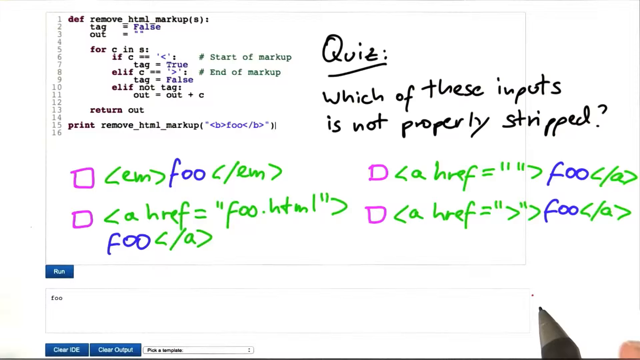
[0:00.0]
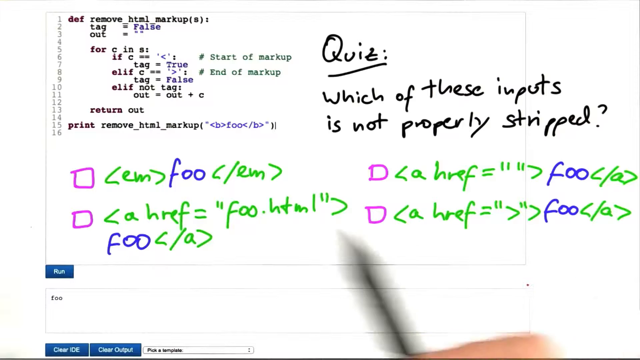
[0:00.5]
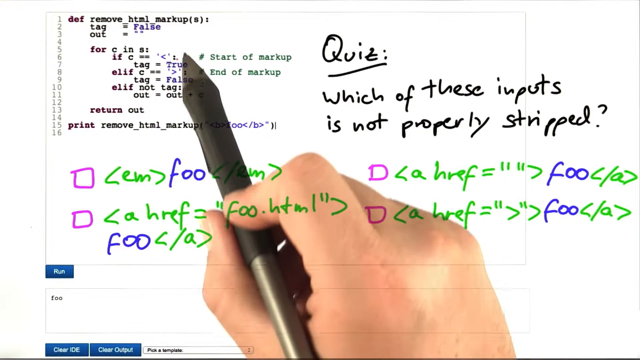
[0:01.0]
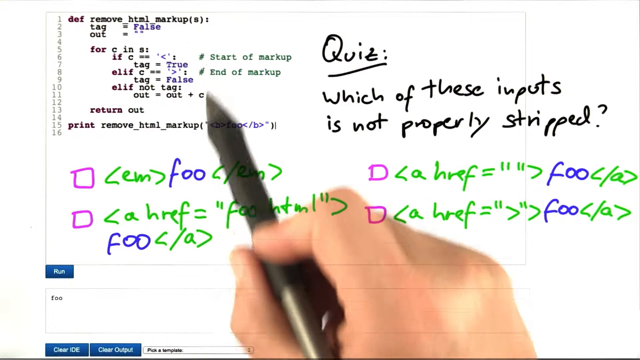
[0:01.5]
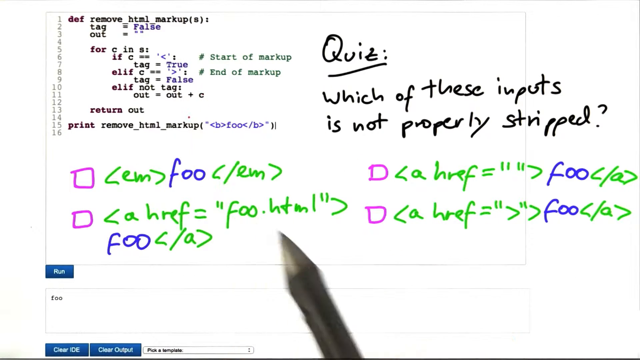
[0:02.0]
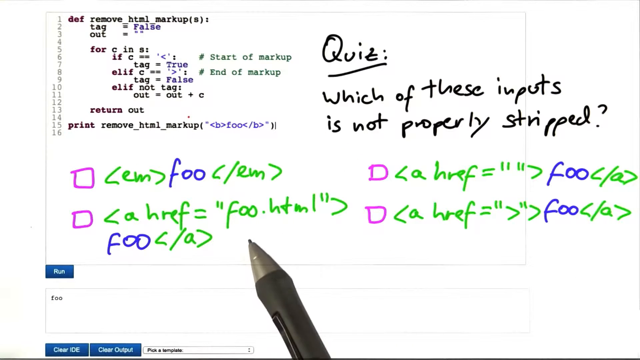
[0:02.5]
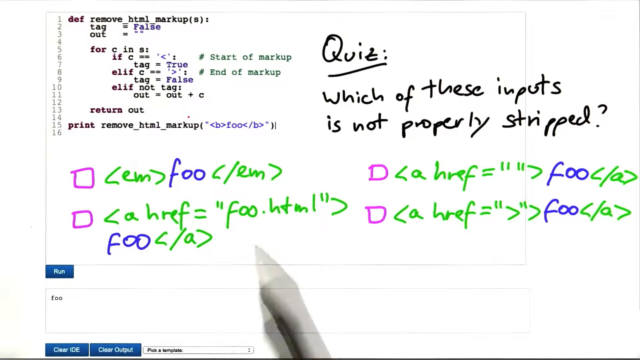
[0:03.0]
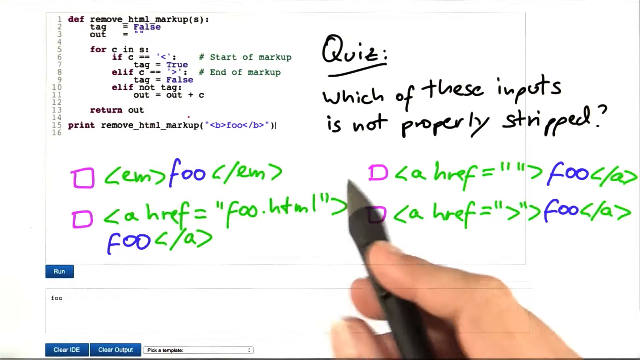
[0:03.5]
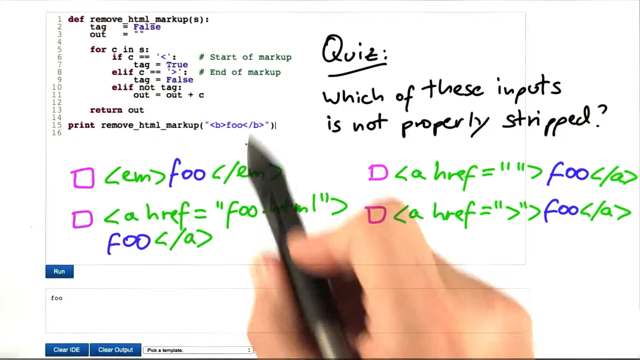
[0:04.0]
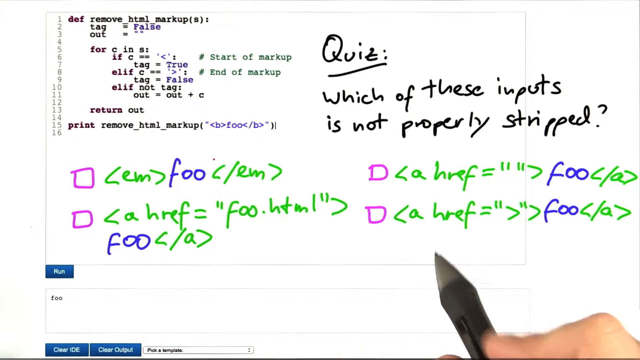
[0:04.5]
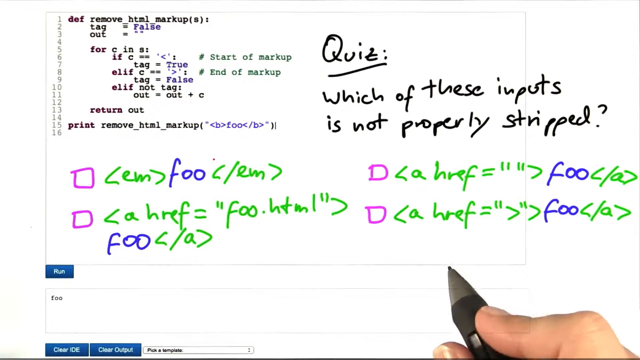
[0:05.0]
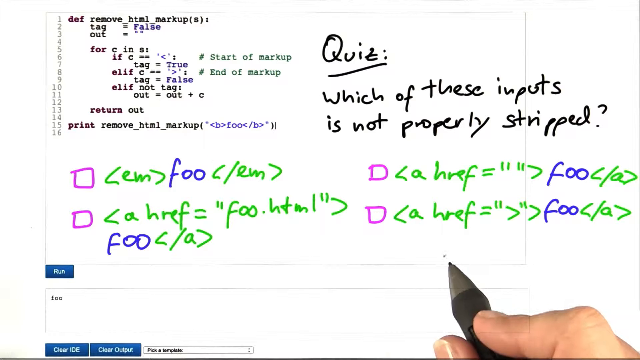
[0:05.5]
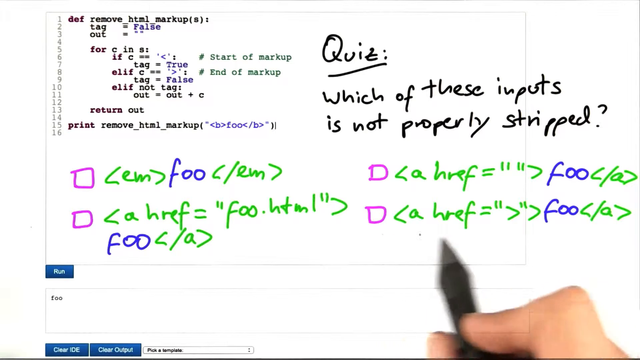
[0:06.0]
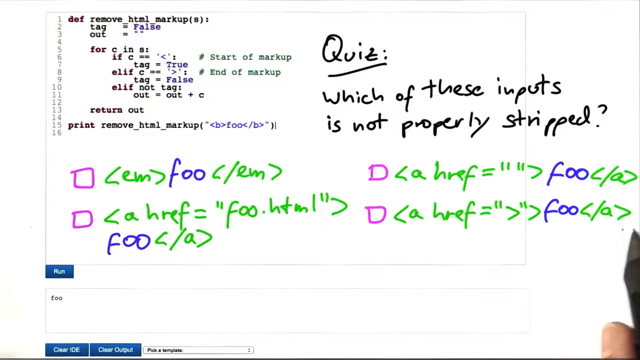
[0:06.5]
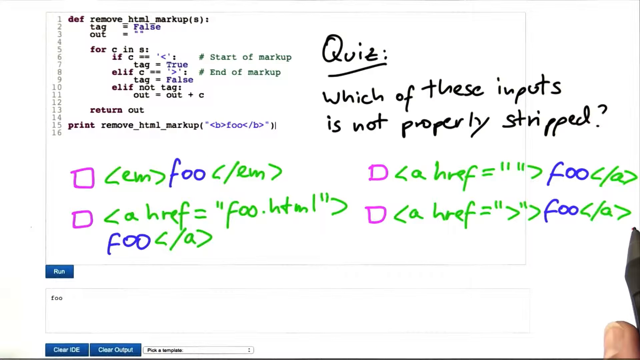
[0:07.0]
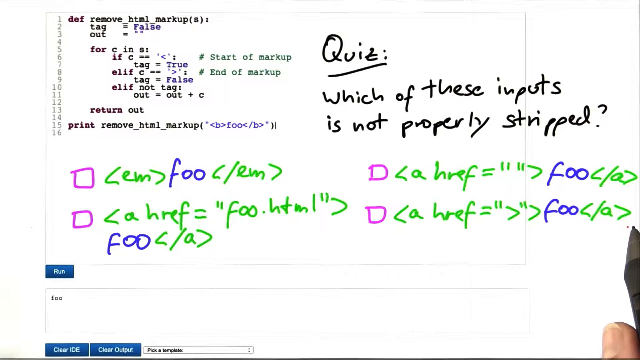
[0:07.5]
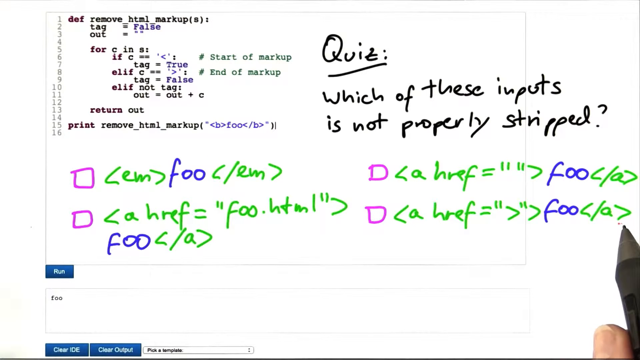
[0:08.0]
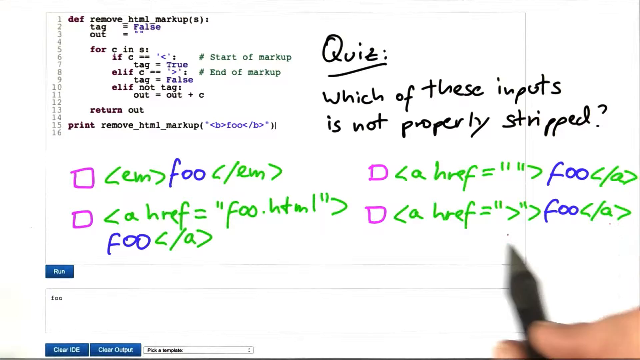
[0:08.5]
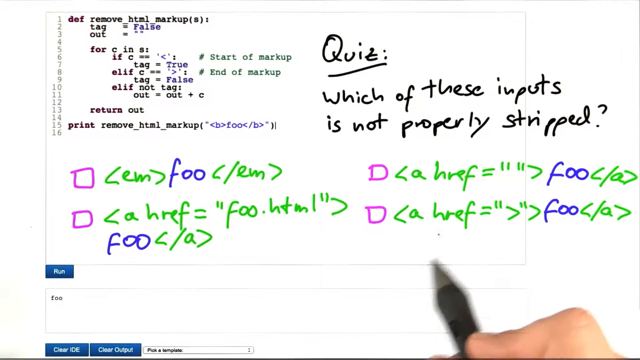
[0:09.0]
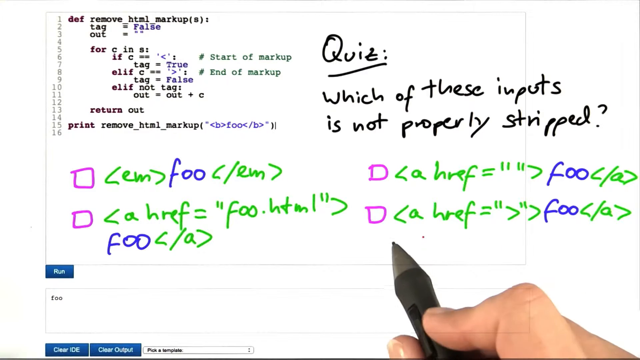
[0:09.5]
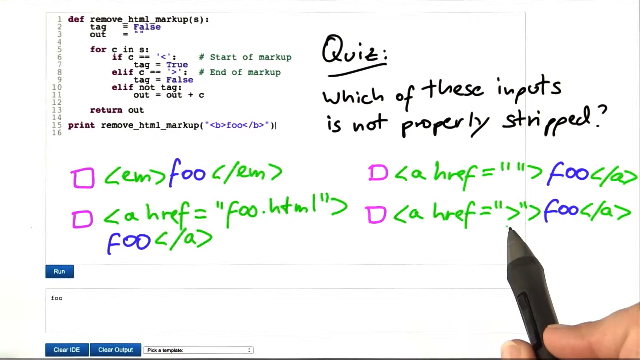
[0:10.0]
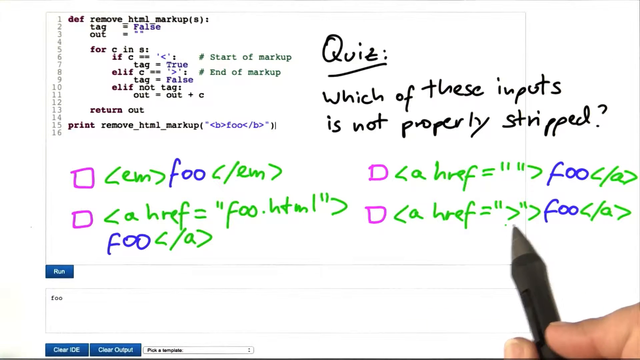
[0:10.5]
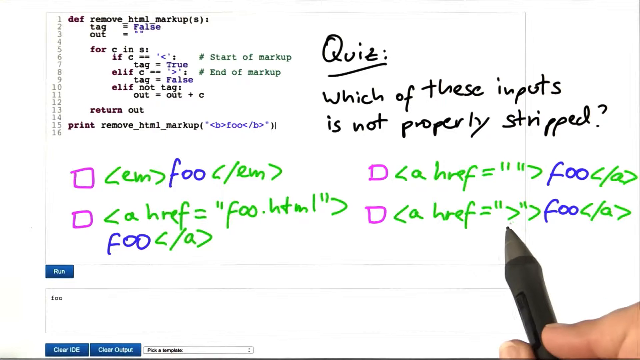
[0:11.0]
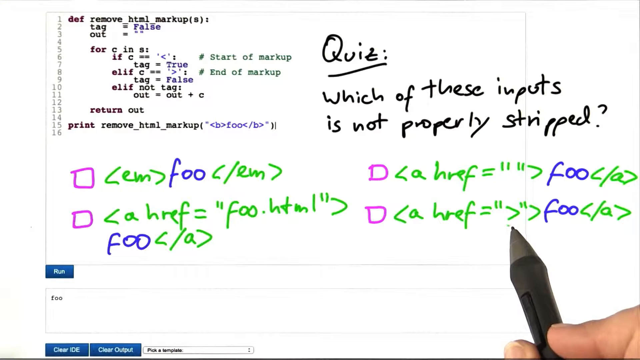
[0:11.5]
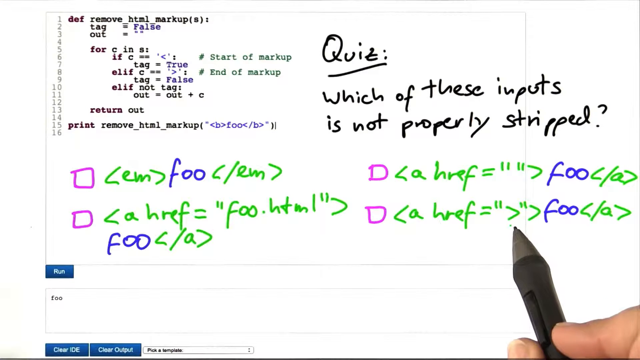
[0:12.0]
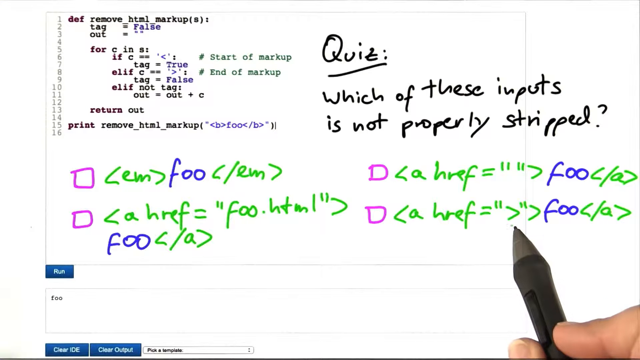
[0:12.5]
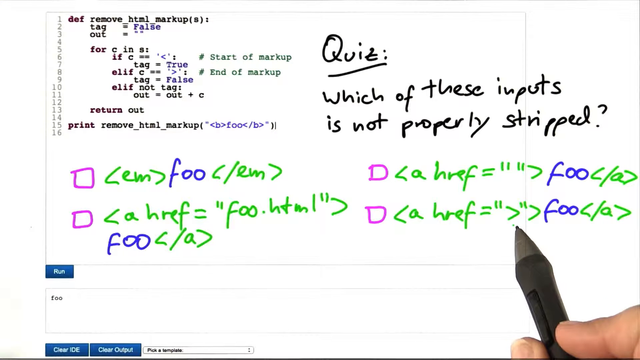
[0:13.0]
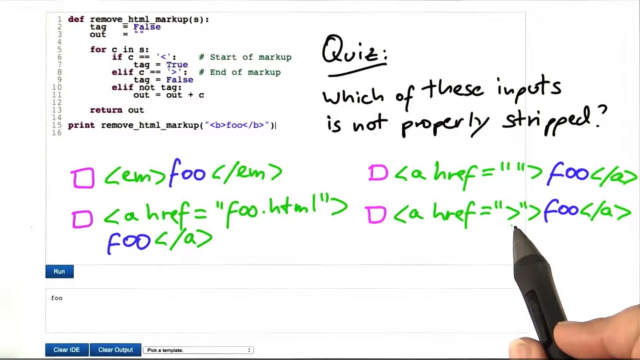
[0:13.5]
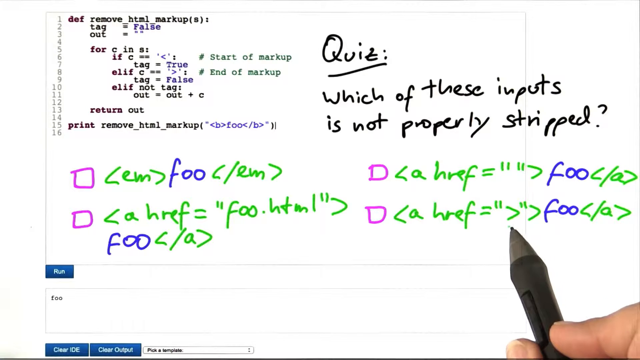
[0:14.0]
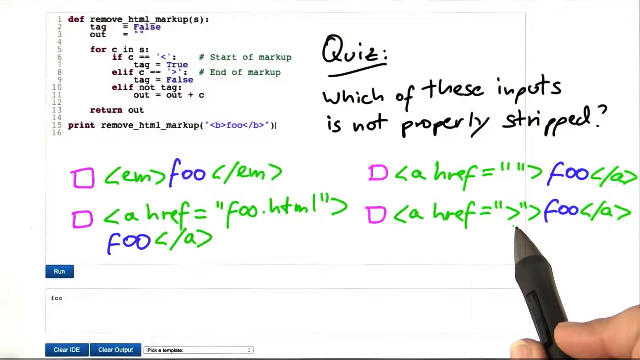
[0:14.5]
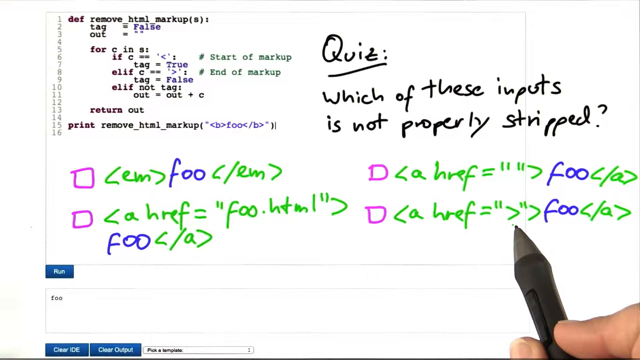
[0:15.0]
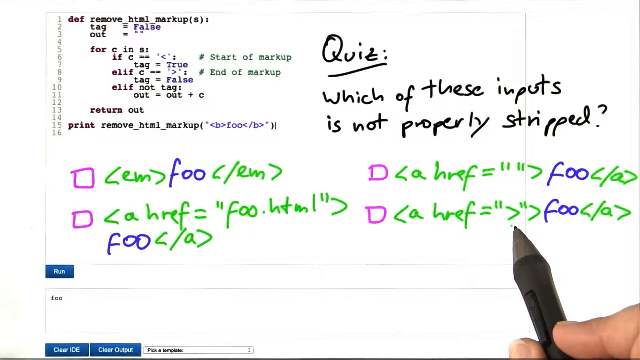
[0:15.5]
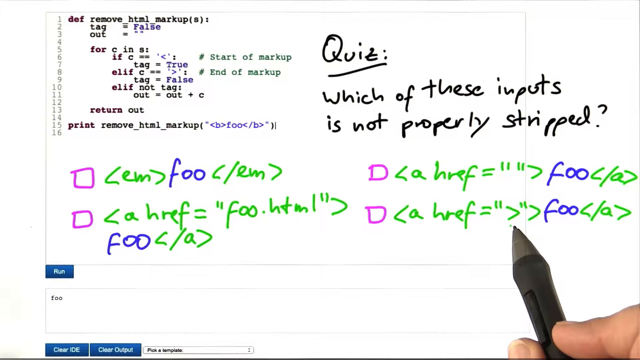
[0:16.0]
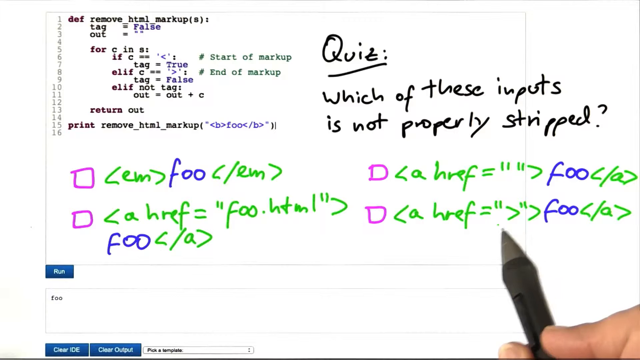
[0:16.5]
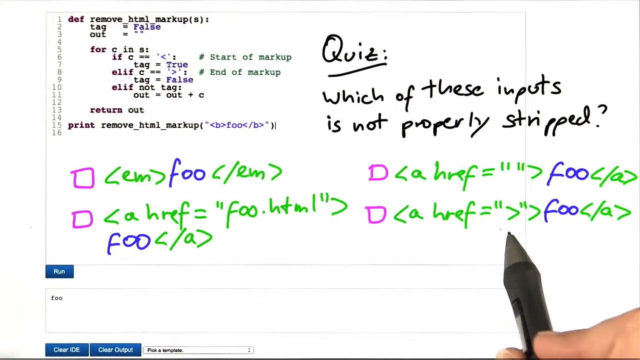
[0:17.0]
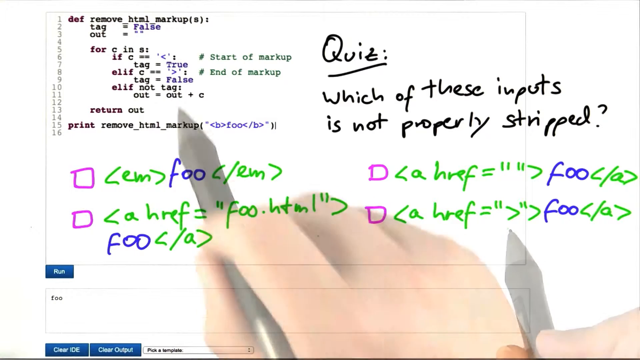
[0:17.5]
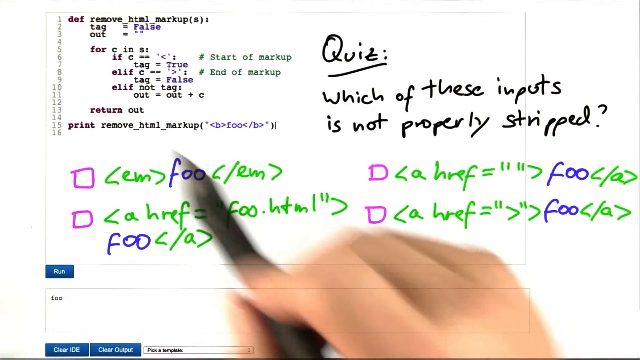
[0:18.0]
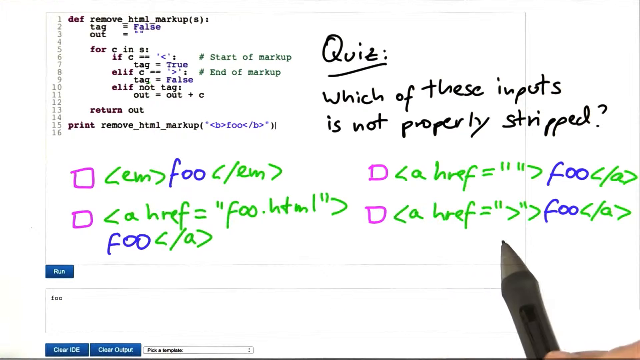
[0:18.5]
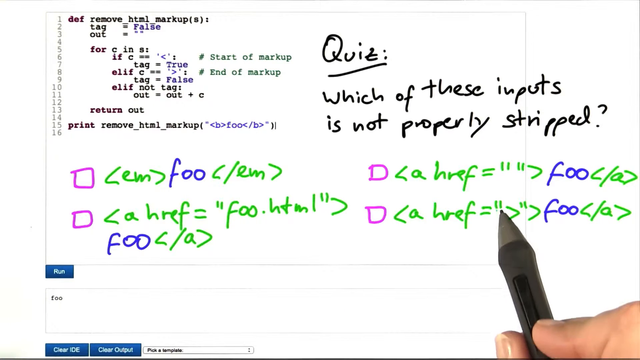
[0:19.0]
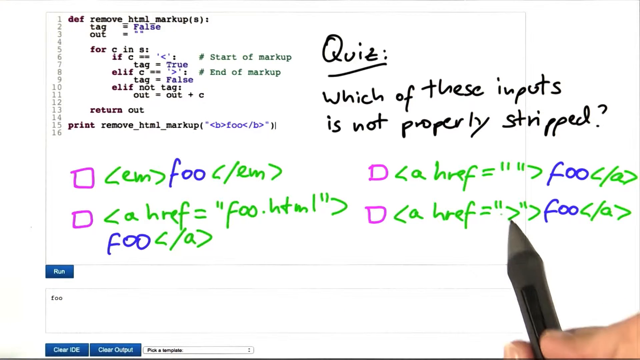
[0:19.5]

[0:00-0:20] A programming script is on screen, with a lot of code to be programmed and some of it already written. The code is HTML.